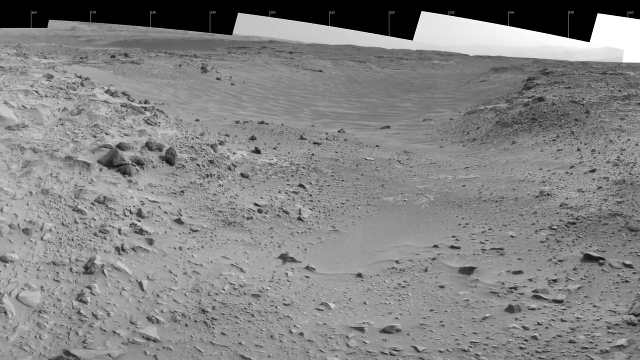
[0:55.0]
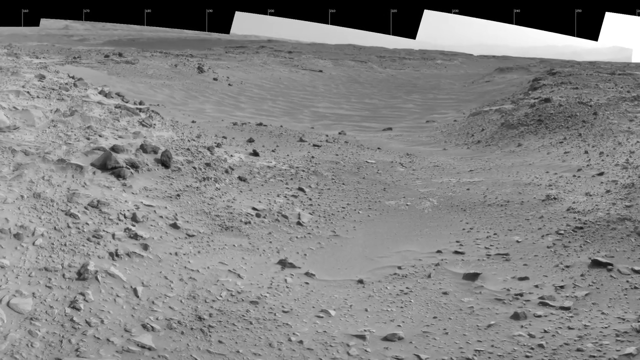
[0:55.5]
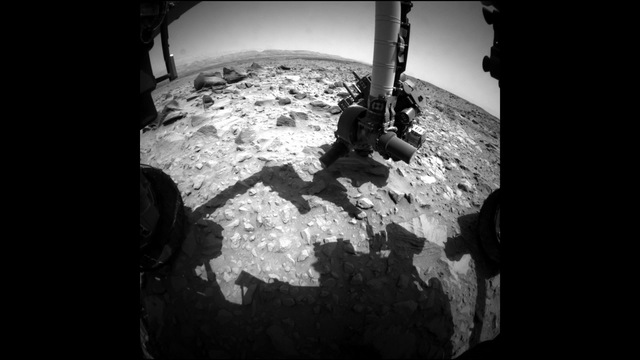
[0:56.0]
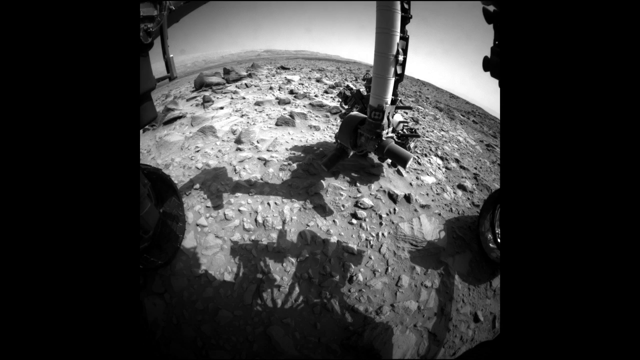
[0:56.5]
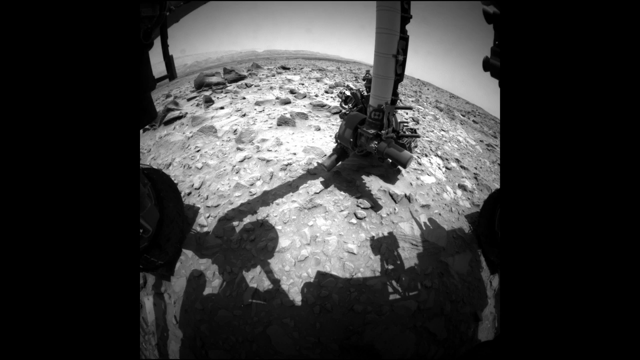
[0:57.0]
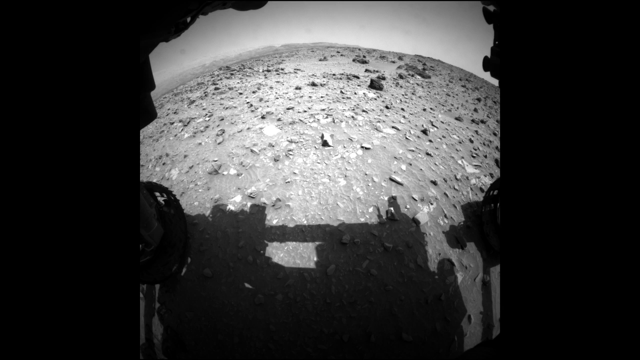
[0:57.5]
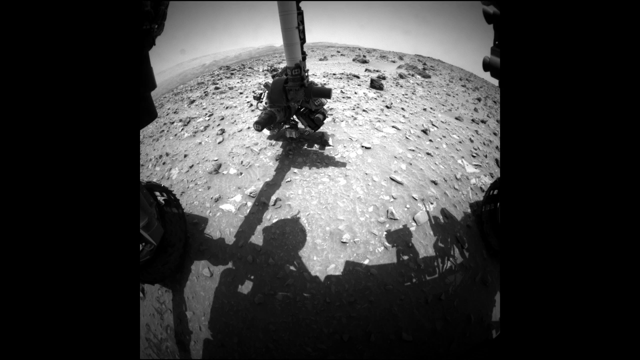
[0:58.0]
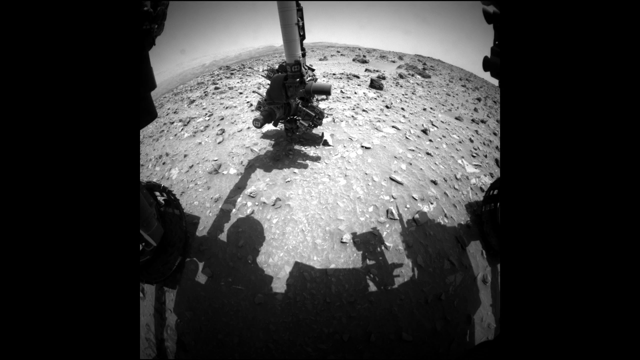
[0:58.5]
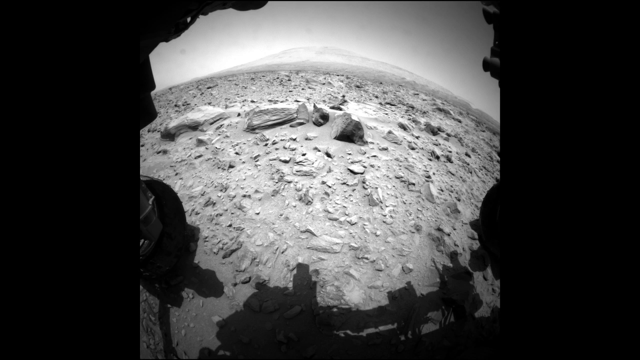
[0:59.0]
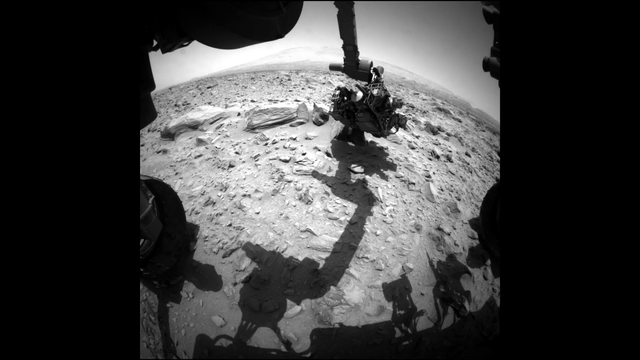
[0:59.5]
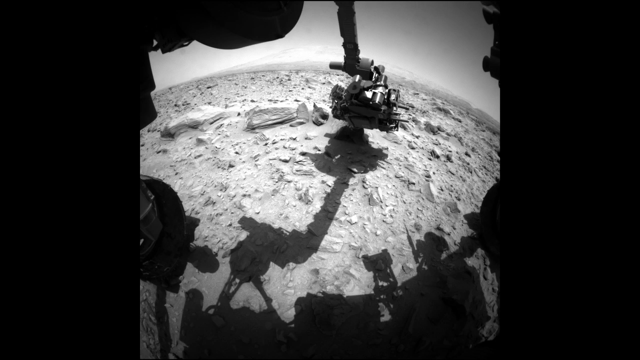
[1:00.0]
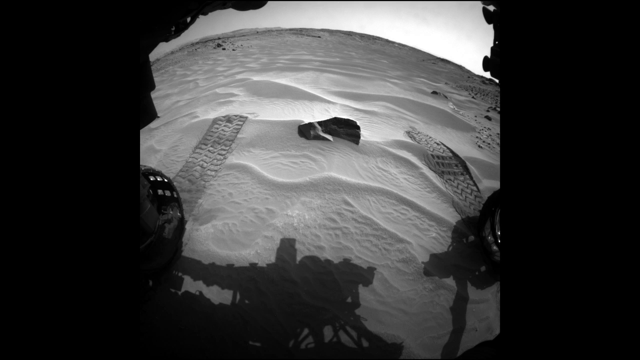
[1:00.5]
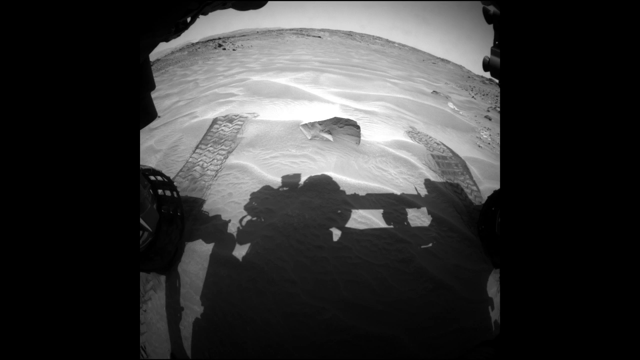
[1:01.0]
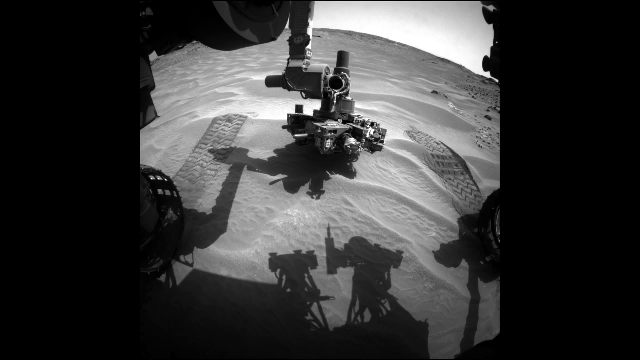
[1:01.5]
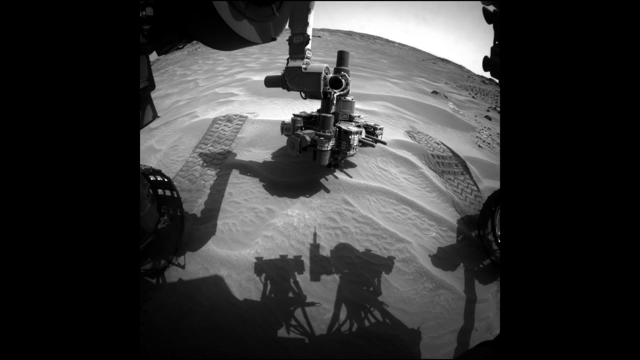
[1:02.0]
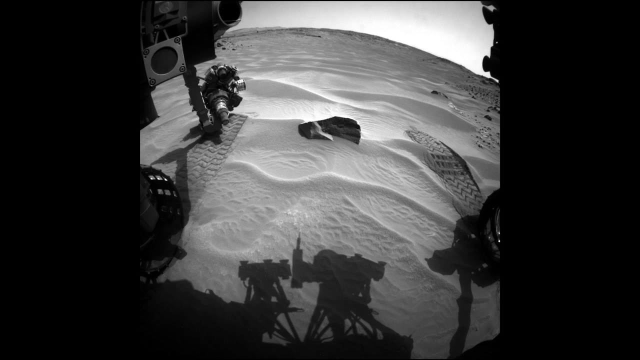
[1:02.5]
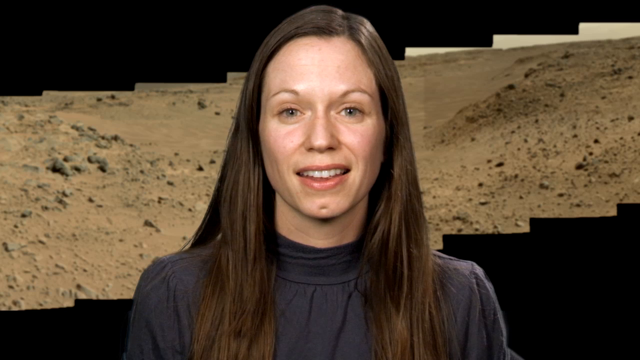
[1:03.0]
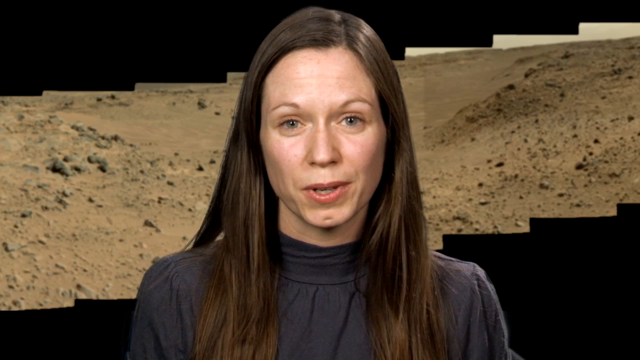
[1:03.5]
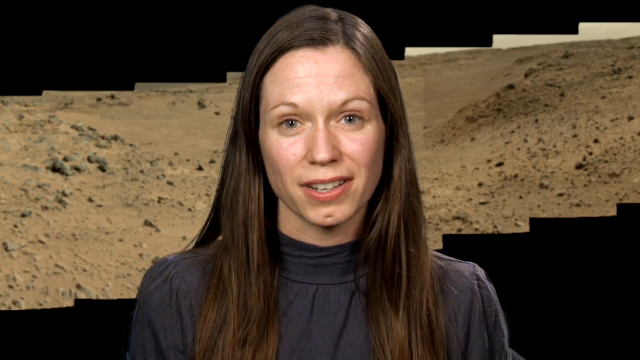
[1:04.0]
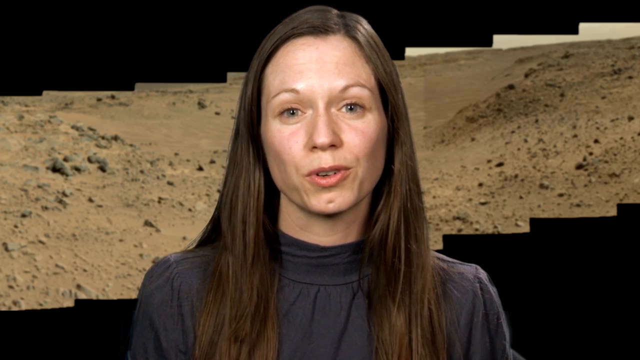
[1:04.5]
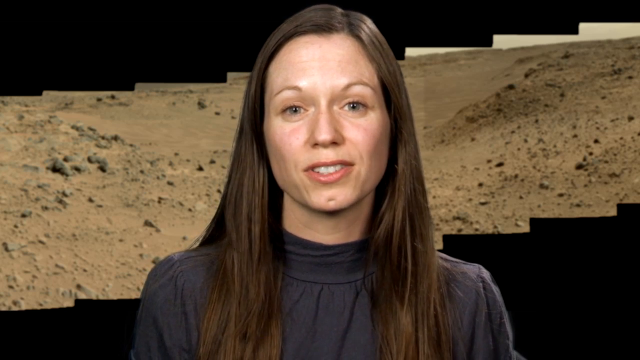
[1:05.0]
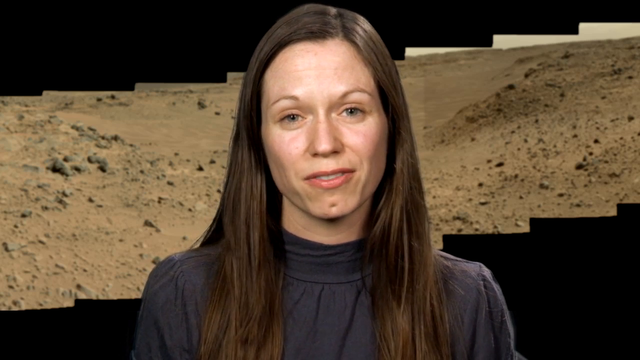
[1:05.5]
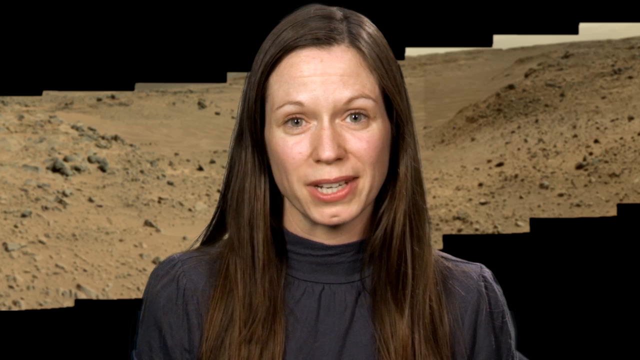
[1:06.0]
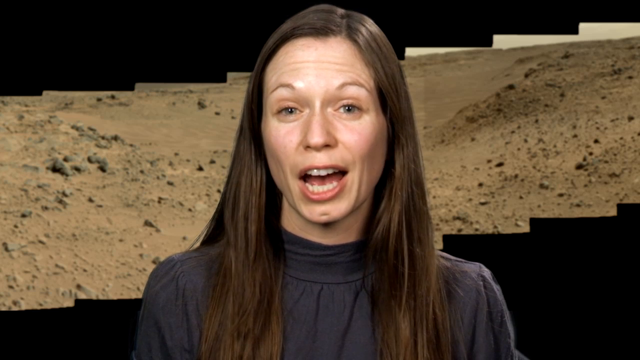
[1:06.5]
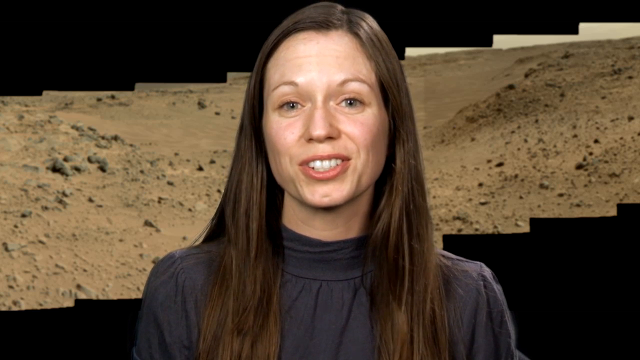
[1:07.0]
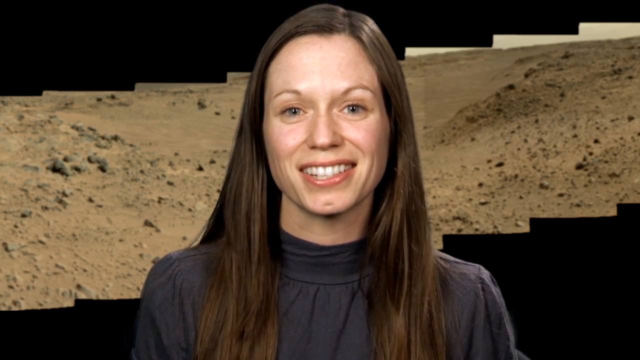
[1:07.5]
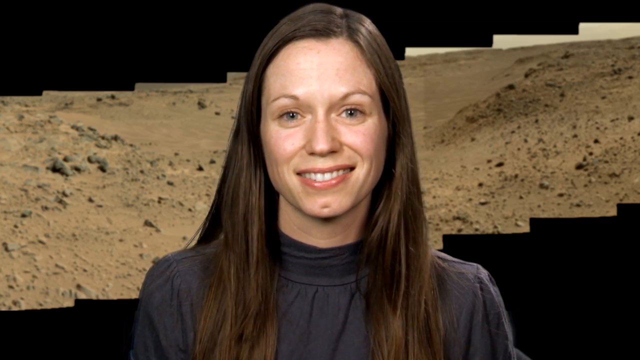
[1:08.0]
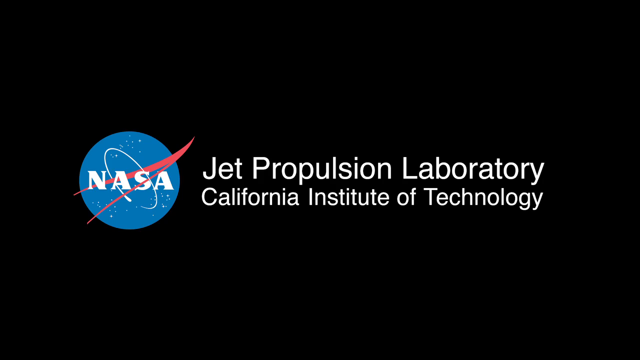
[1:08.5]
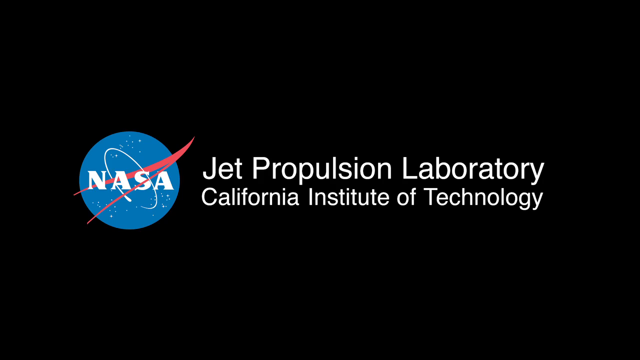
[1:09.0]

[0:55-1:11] Another 360 photo appears, with jagged top and bottom edges, in black and white, showing the terrain the rover will be covering. A shot from the rover's perspective follows; it appears to be time-lapse, as the shadows at the bottom of the screen change over a few seconds, though little else moves. The video cuts to a talking head of the woman again, with a different 360 shot of the terrain, in color, behind her. It then moves to the closing logo, the NASA logo, which reads "Jet Propulsion Laboratory, California Institute of Technology", and the video ends.